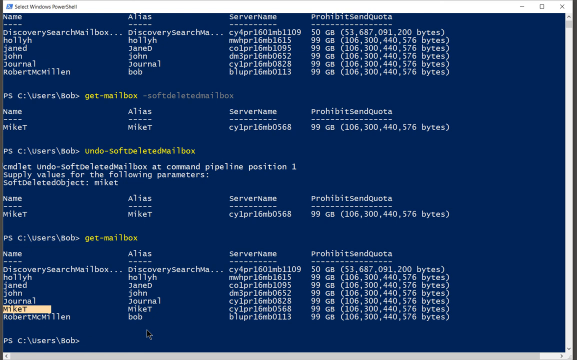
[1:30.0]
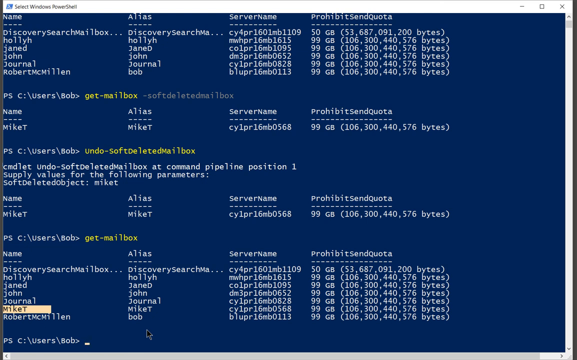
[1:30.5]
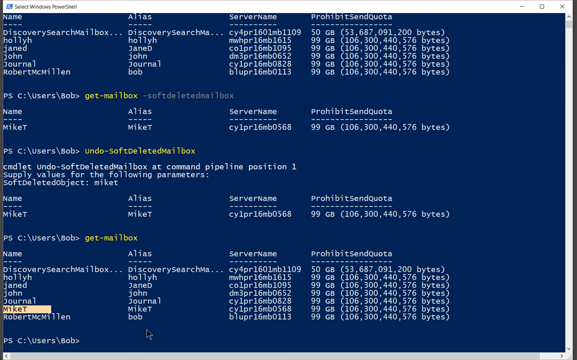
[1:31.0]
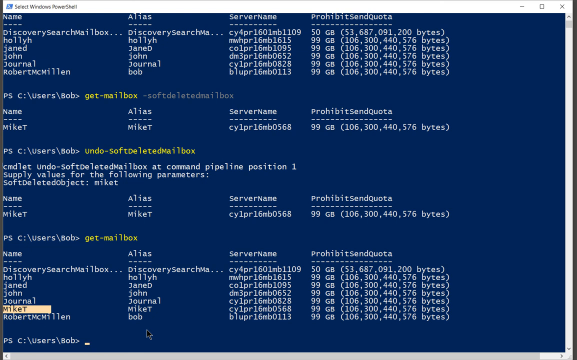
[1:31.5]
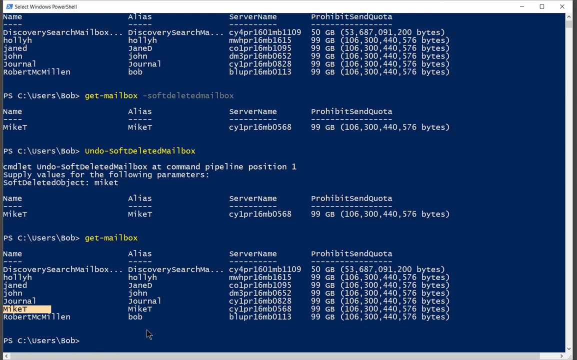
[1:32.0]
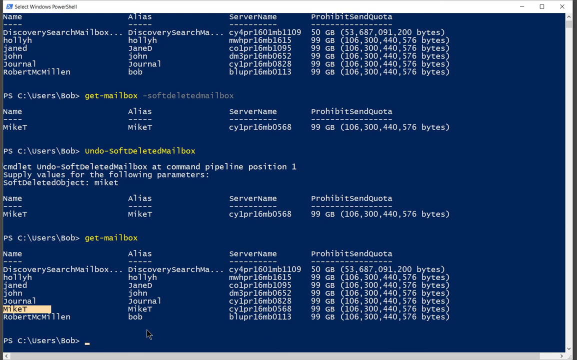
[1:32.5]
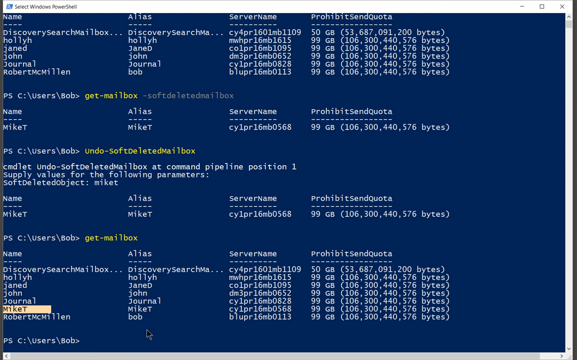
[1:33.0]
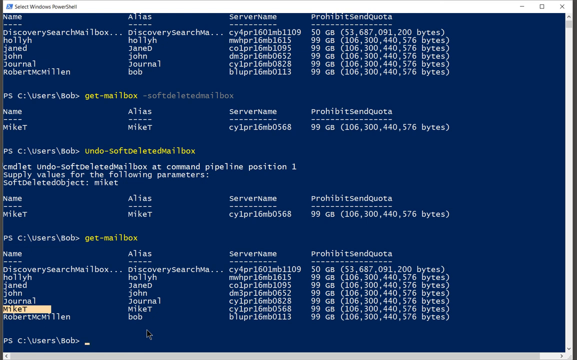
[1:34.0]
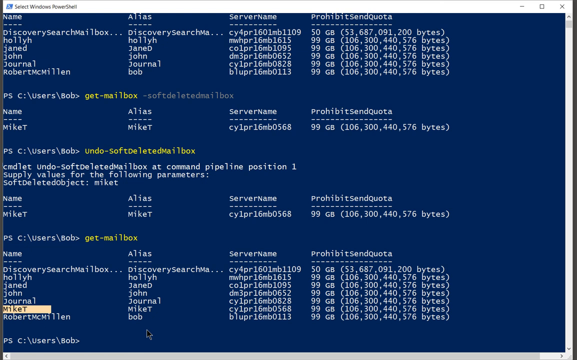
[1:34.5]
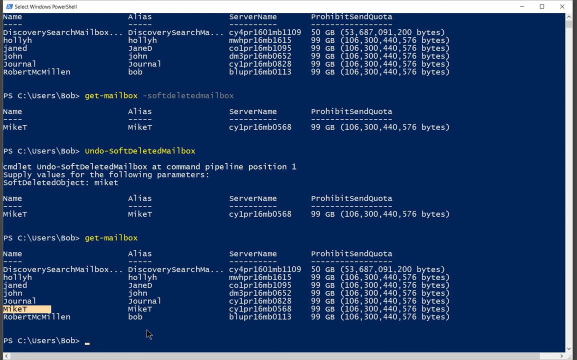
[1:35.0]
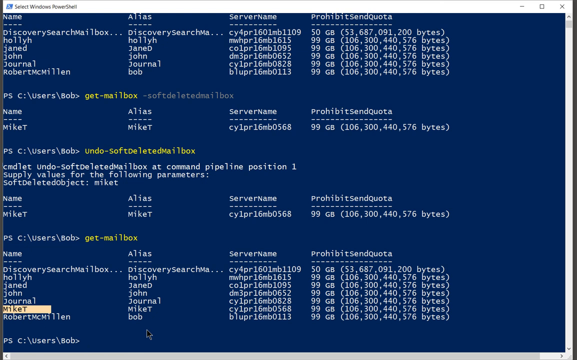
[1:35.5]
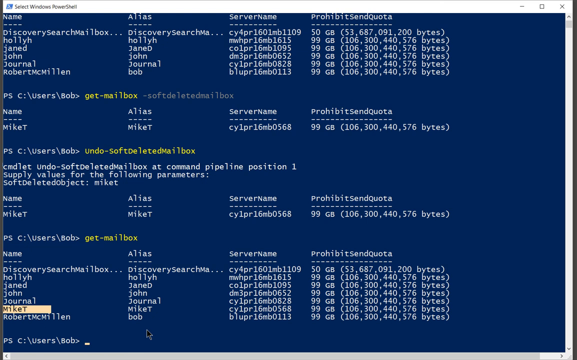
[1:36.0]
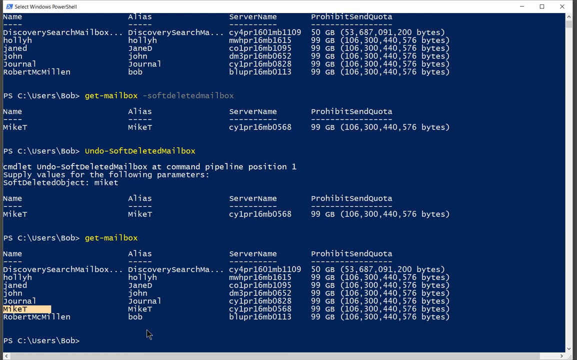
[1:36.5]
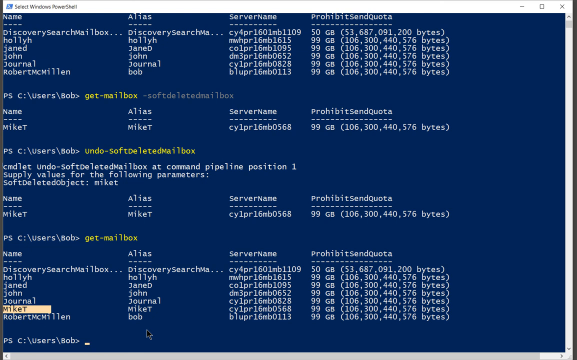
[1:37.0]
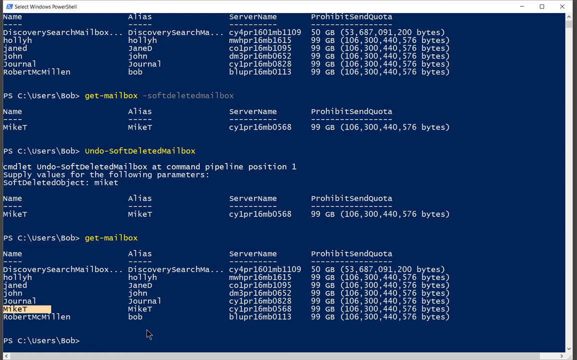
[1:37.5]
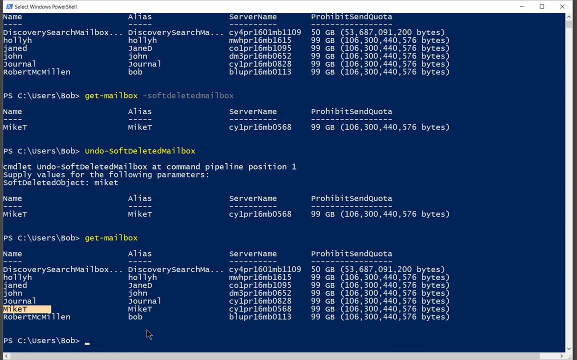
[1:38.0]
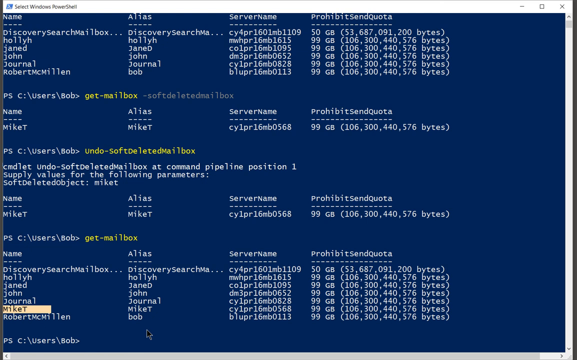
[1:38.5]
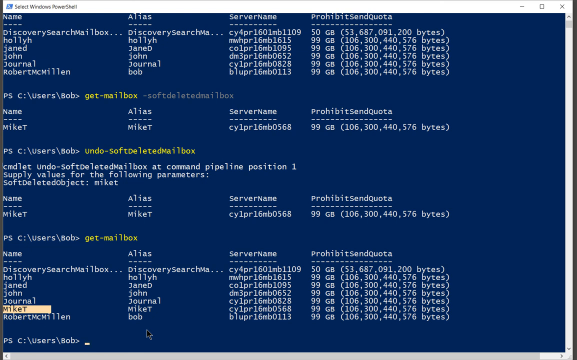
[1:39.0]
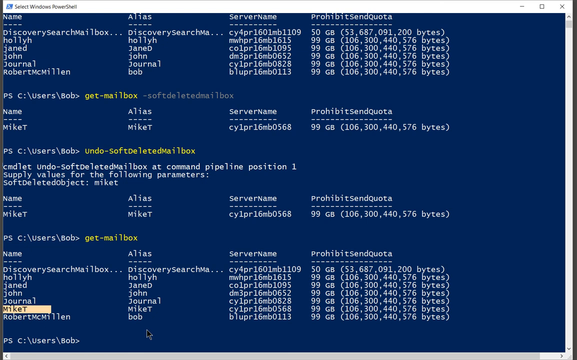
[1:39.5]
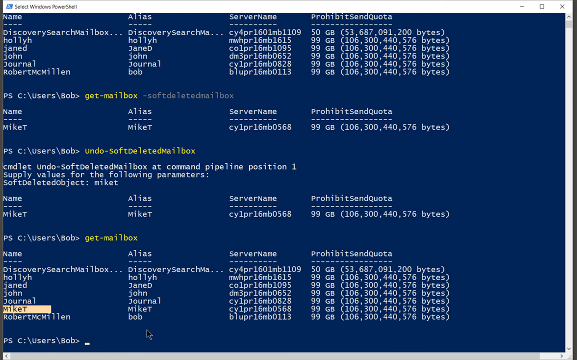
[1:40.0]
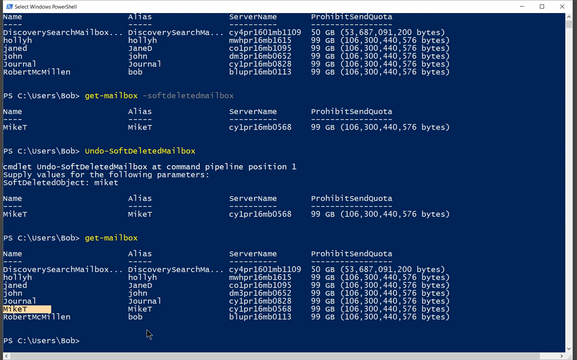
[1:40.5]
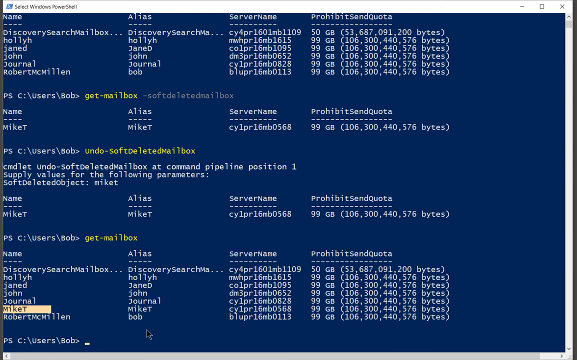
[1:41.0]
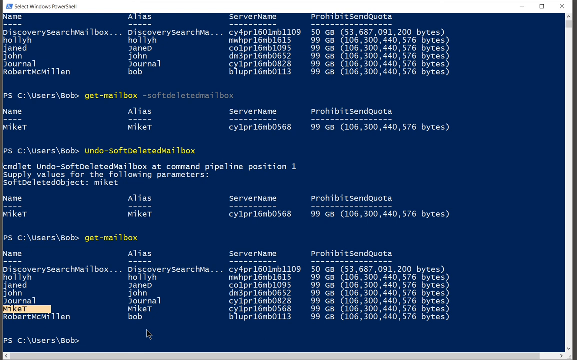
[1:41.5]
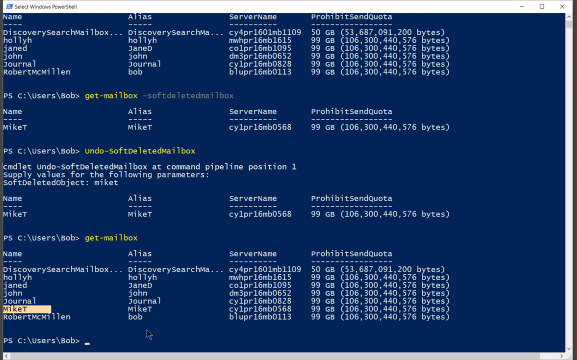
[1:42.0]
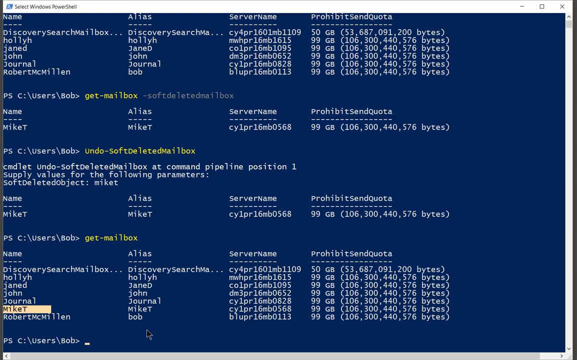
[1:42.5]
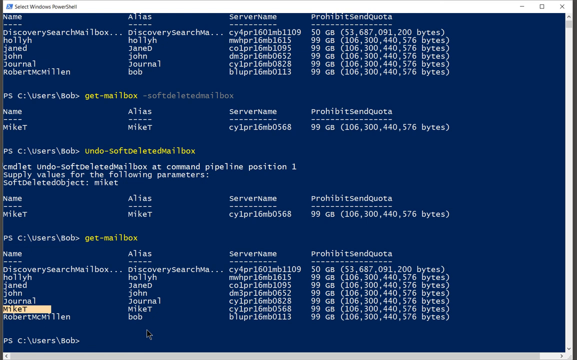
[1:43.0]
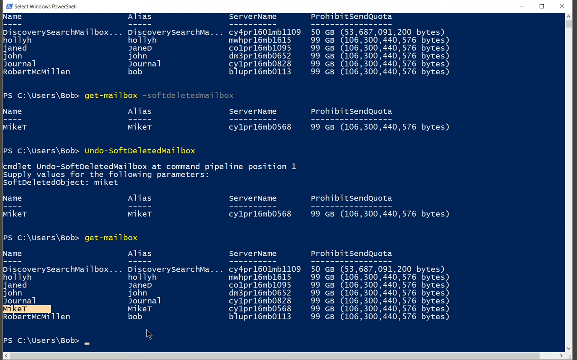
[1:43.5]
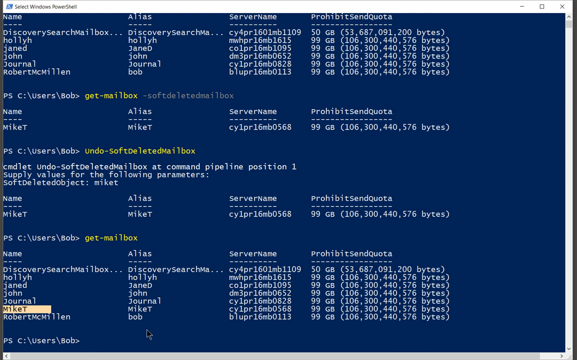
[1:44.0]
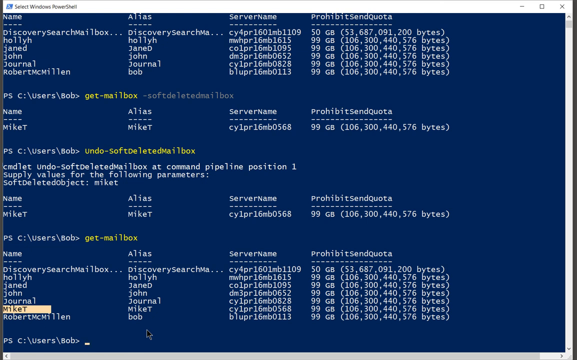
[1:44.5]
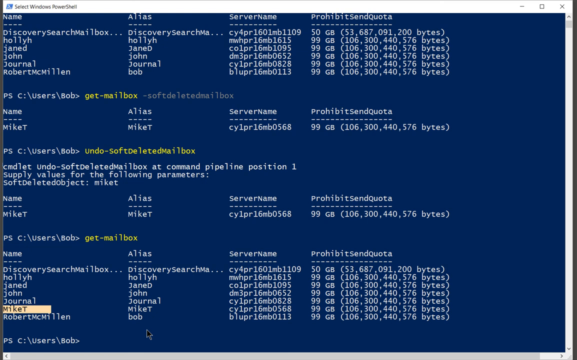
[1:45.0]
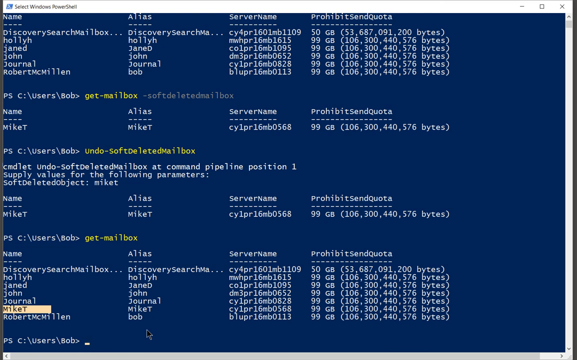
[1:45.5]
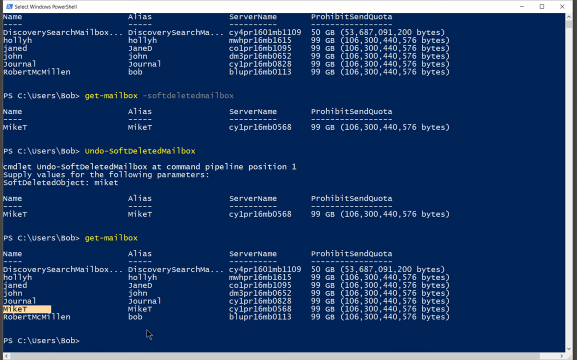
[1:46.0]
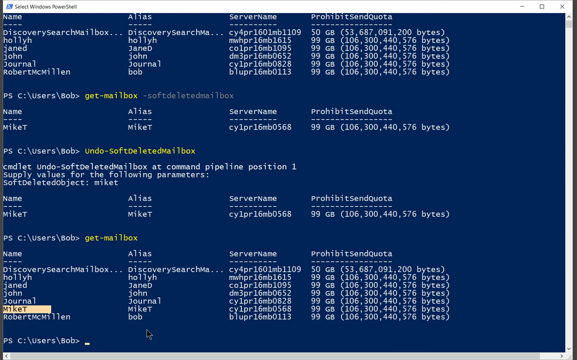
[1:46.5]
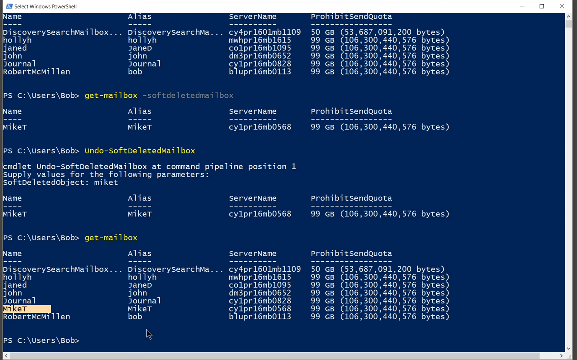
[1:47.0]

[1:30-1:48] The code shows names grouped together, different types of names, and numbers, with some parts highlighted. The background is a little dark blue and the text is white.